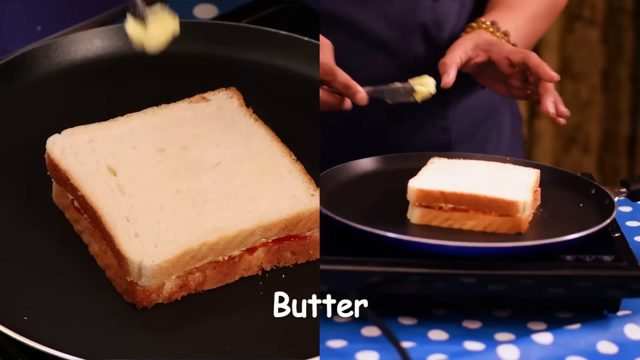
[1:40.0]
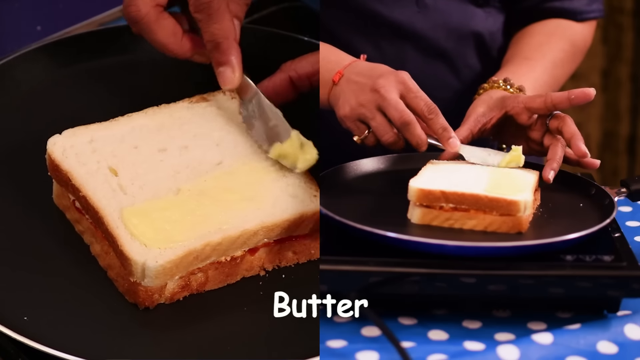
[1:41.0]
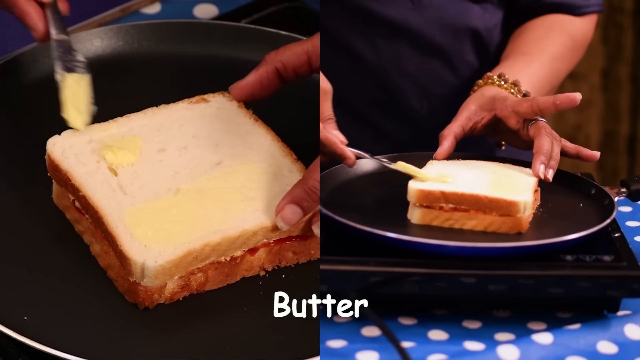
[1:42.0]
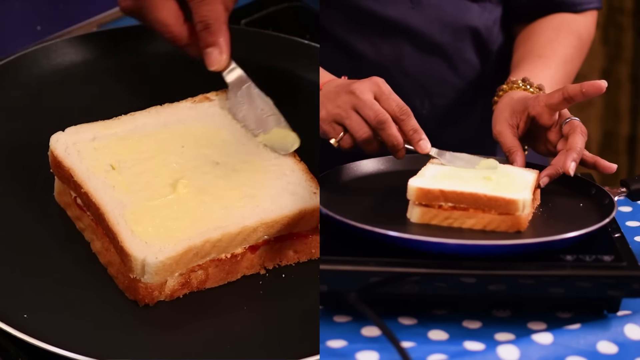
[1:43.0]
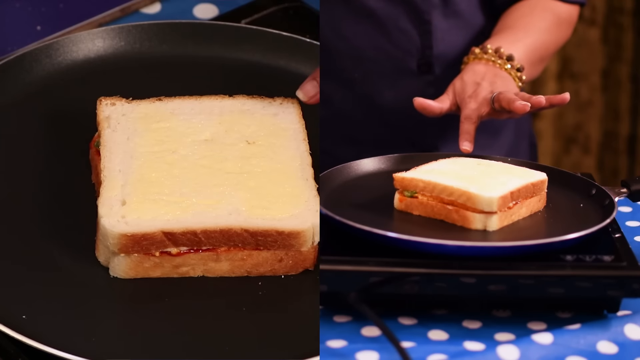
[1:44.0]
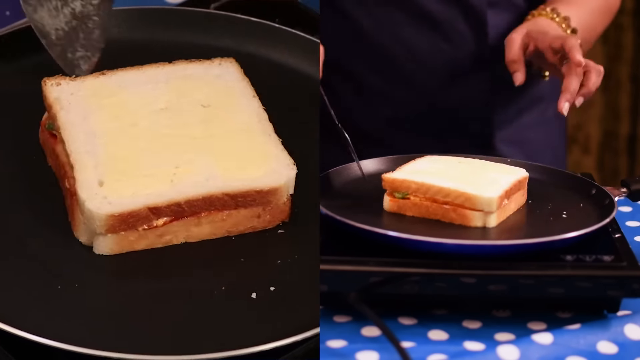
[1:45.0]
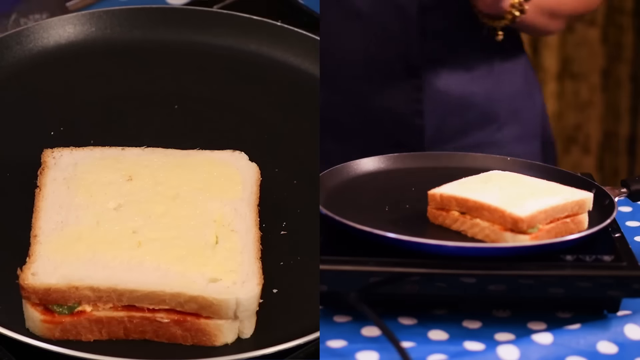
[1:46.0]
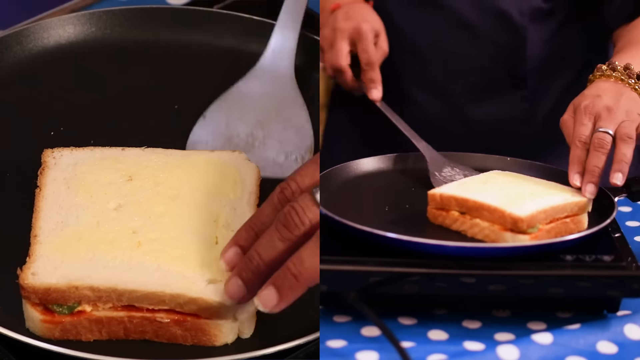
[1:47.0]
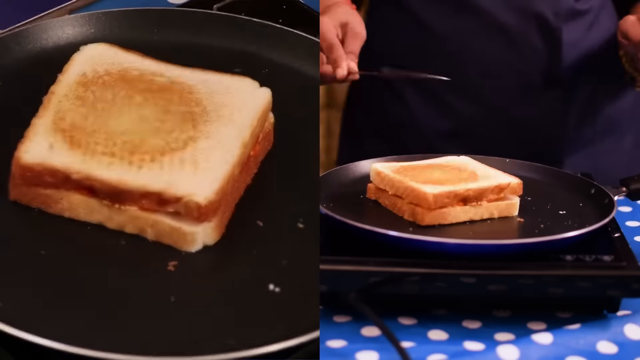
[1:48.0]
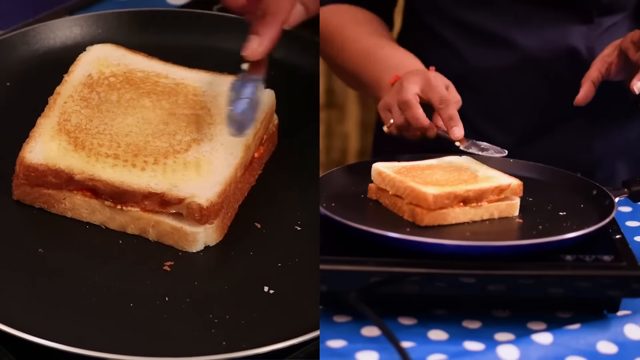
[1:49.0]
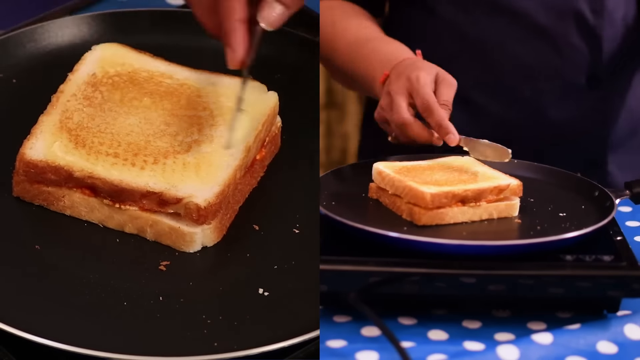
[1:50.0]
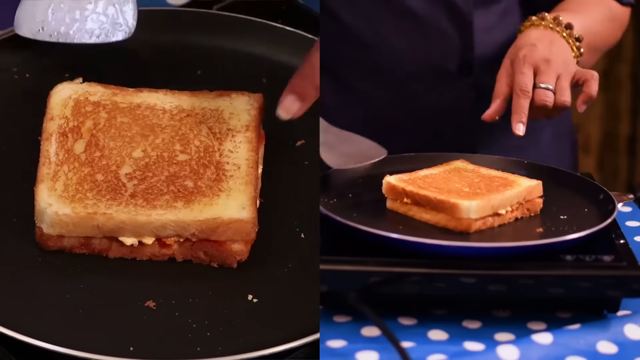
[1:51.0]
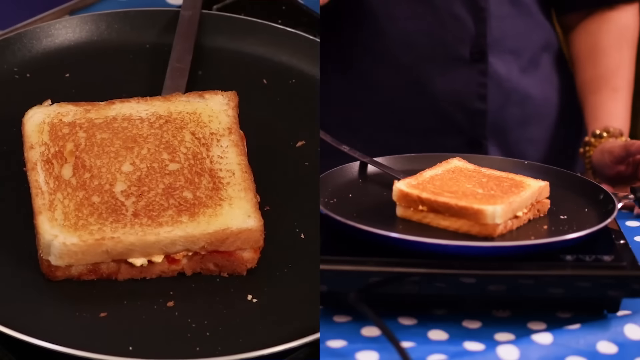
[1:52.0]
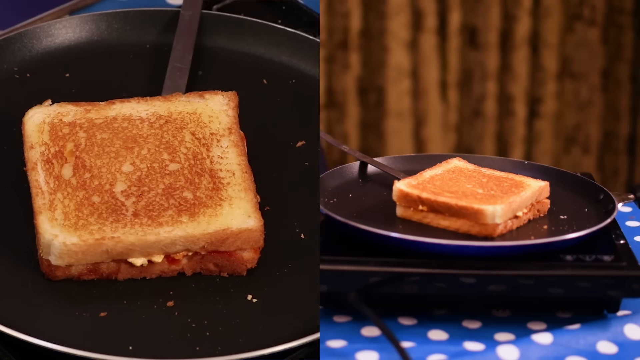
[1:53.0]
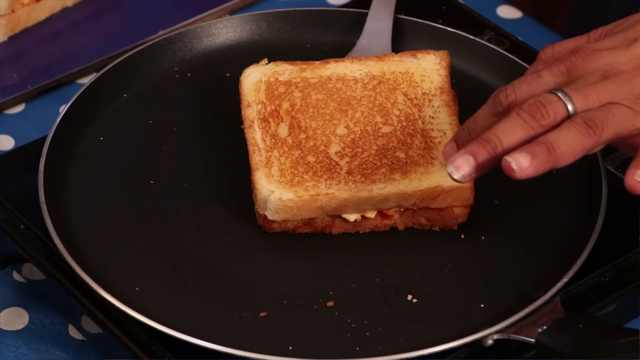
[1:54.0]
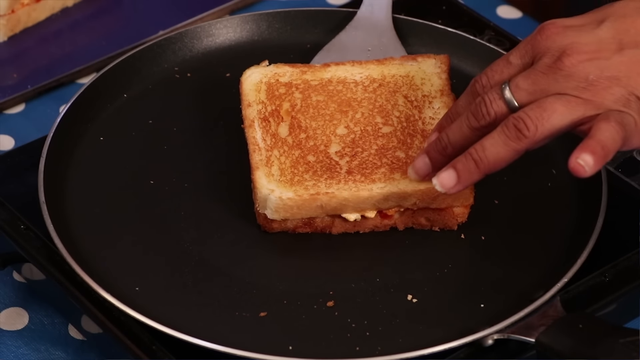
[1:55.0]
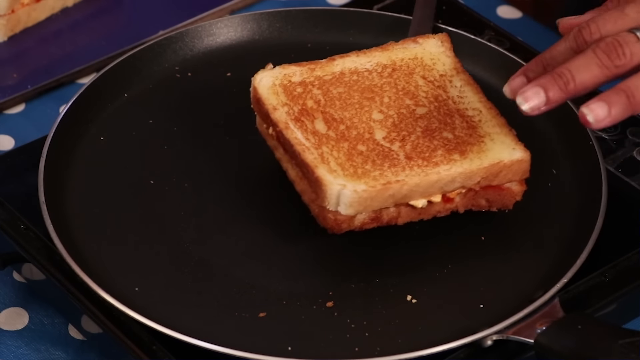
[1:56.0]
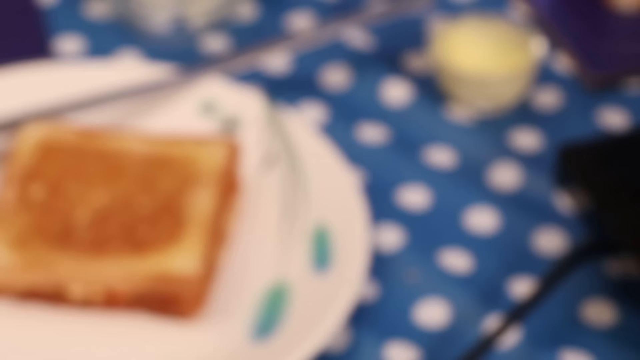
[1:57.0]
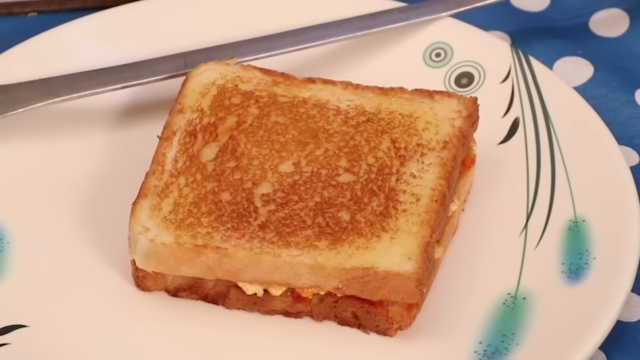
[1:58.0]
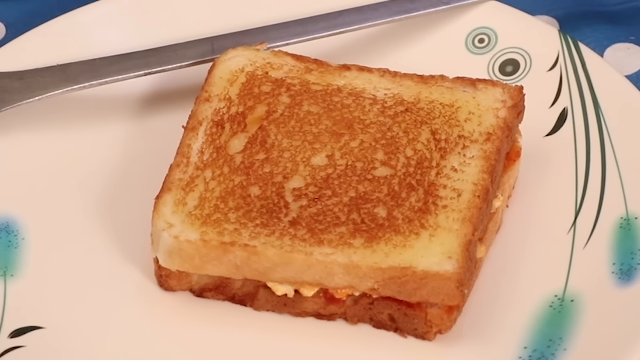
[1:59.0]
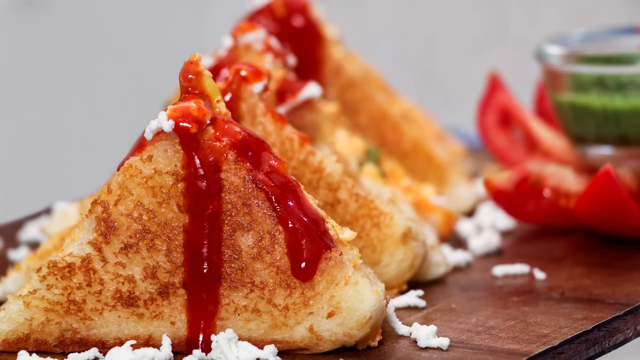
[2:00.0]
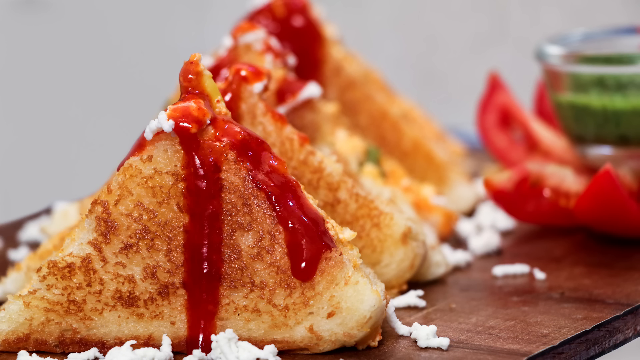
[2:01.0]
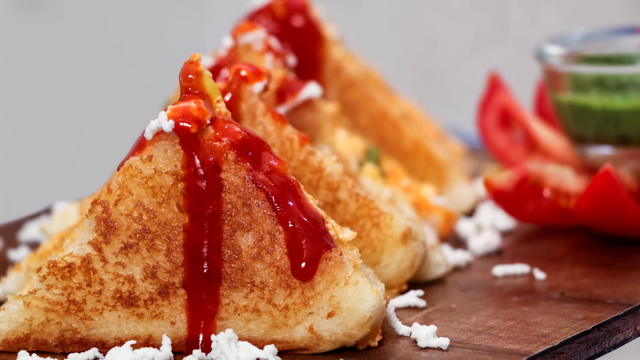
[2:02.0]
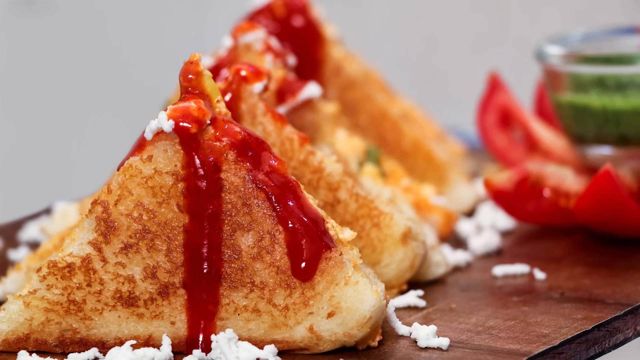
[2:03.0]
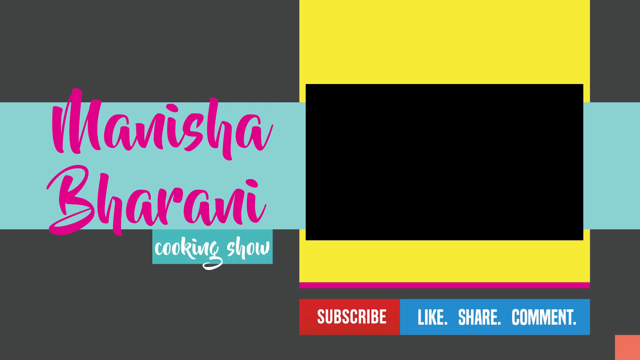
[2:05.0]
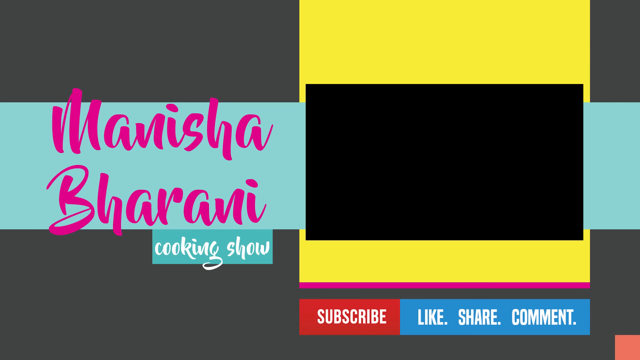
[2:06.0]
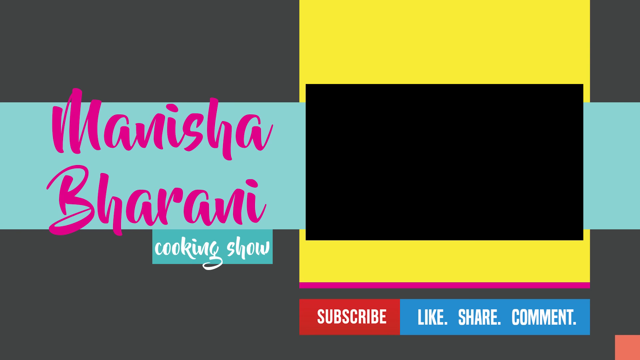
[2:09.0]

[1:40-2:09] A side-by-side shot shows the skillet. Apparently there is no butter on the top piece of bread she just added. The left view is more zoomed in, while the right view is farther away and more from the side, with some polka dots visible on its right side. She holds a little butter above the sandwich with her right hand and spreads it at the top from right to left, then at the bottom and in the middle. It looks like she flipped the sandwich off-screen, since butter is visible on the other side. With a spatula she moves it around, pushing it to the edge and passing over it a few times. It is not toasted at all the corners, appearing toasted around the patty in the middle of the bread; then it somehow looks more even. She picks it up and puts it back down without flipping it. A few bread crumbs are visible around the skillet. With her right hand she puts it on a plate. The finished product is cut in a triangular formation, with a little cheese visible on the left side and some kind of strawberry topping poured on top, running down like a volcano. Text reads "Minisha Bharani" in pink cursive, with "cooking show" in white about half the size. At the bottom right, a red box with white writing says "subscribe", with "like, share" to the right of it.